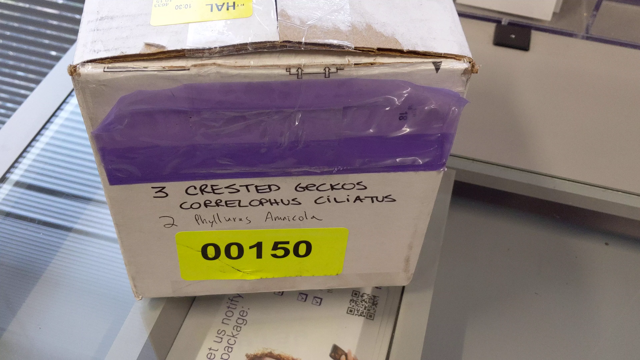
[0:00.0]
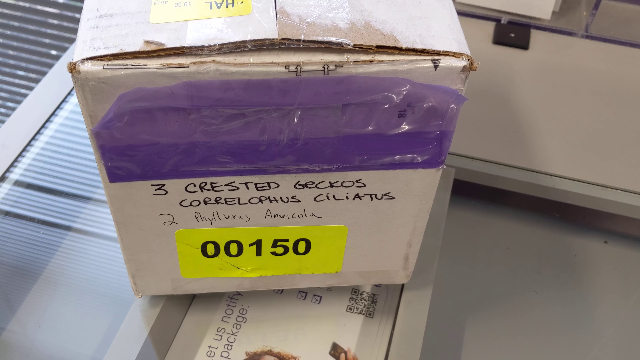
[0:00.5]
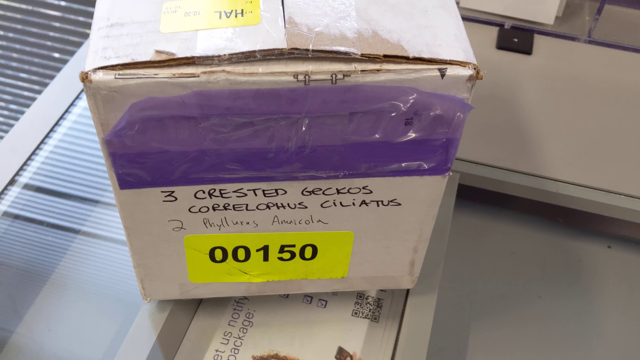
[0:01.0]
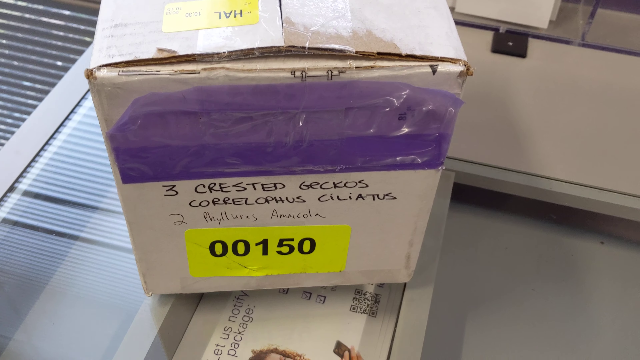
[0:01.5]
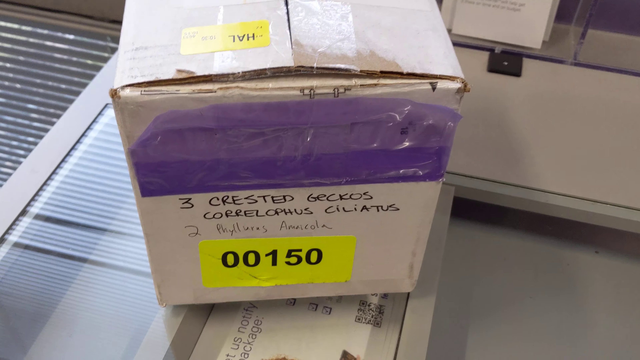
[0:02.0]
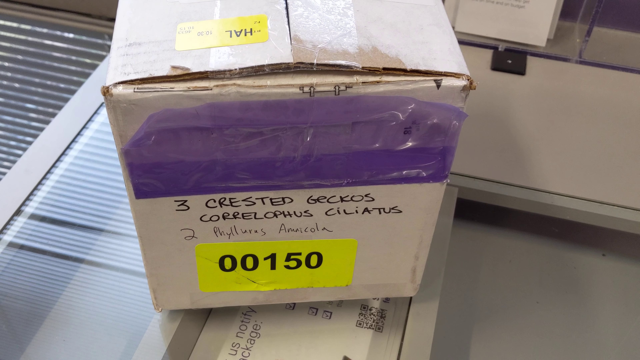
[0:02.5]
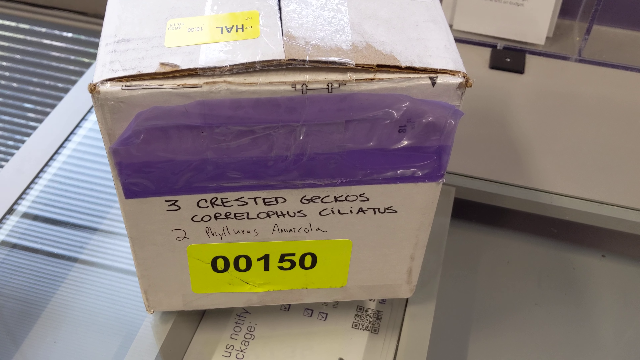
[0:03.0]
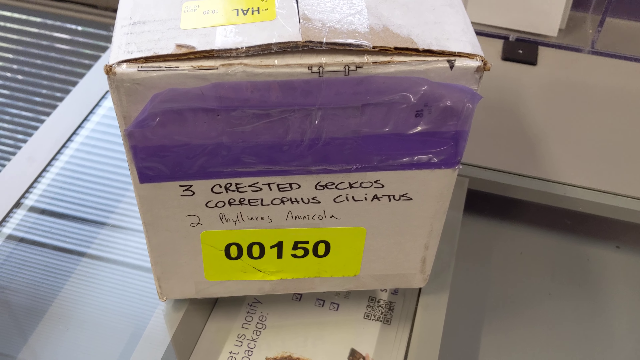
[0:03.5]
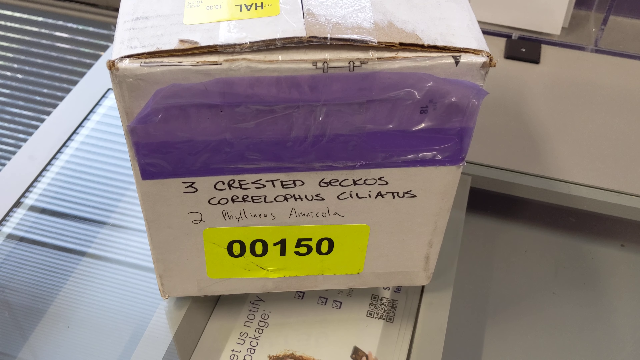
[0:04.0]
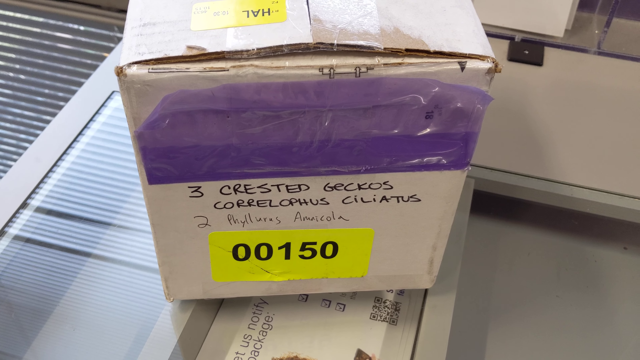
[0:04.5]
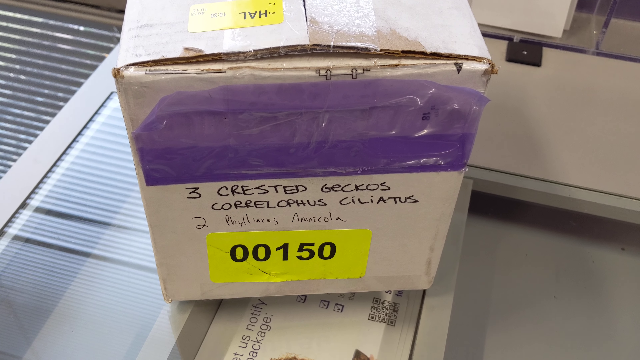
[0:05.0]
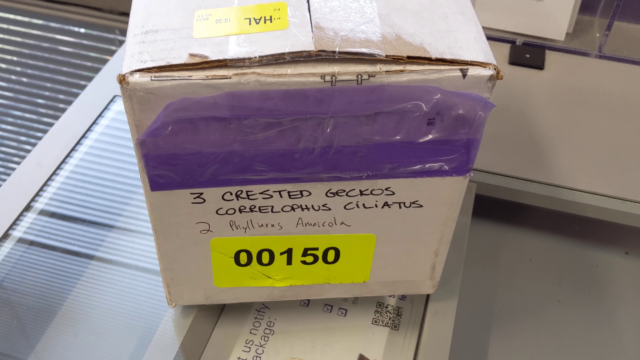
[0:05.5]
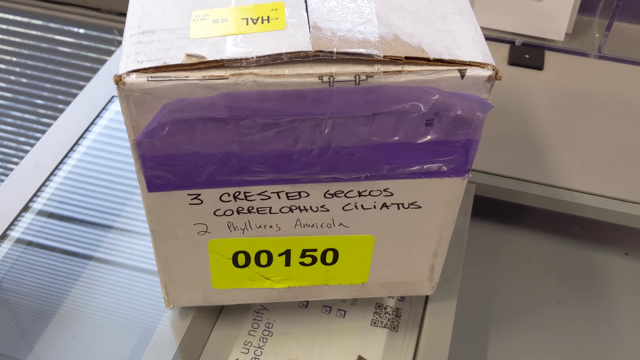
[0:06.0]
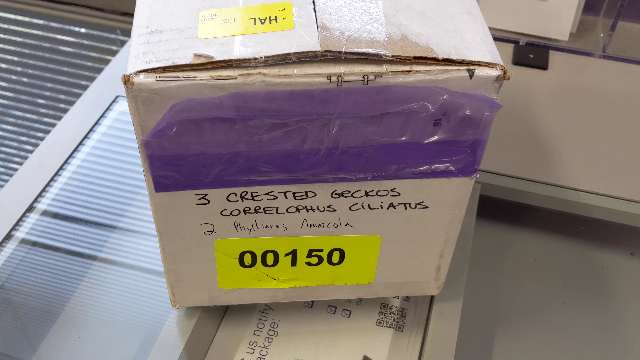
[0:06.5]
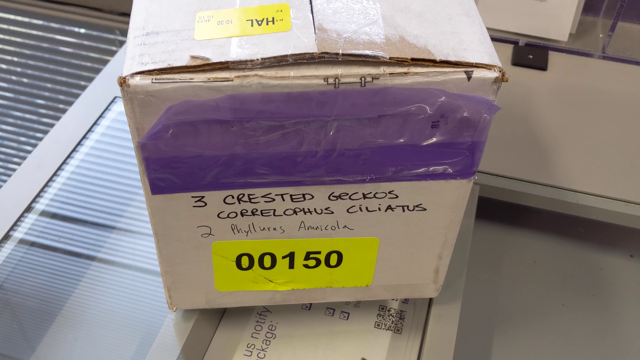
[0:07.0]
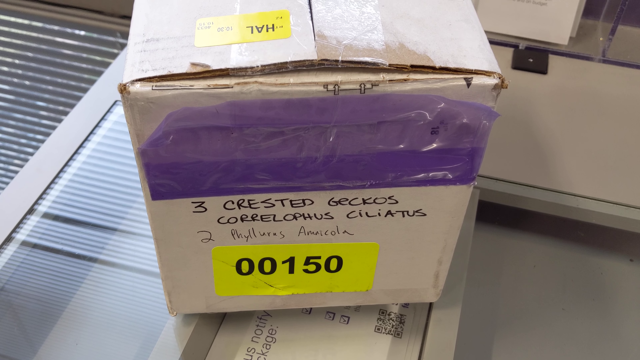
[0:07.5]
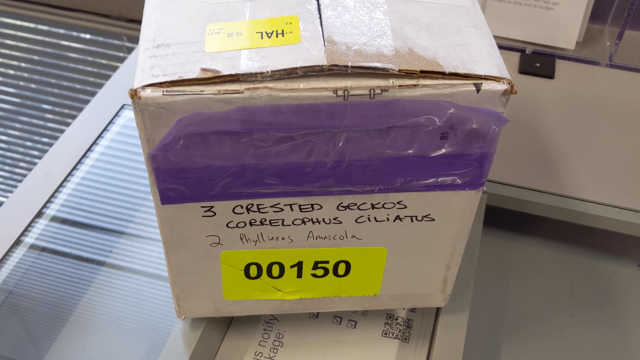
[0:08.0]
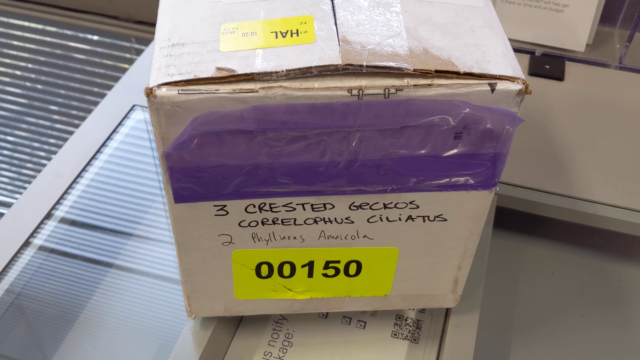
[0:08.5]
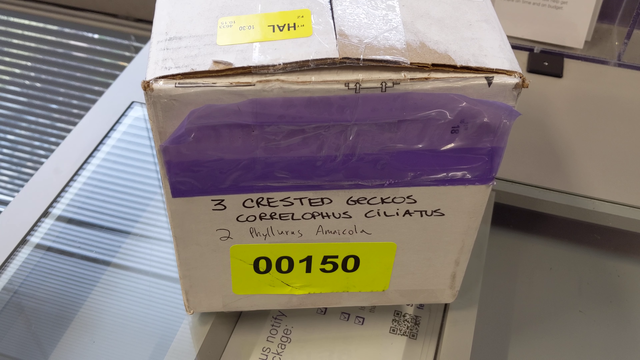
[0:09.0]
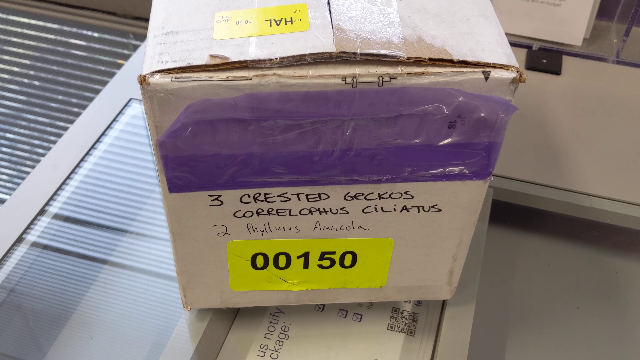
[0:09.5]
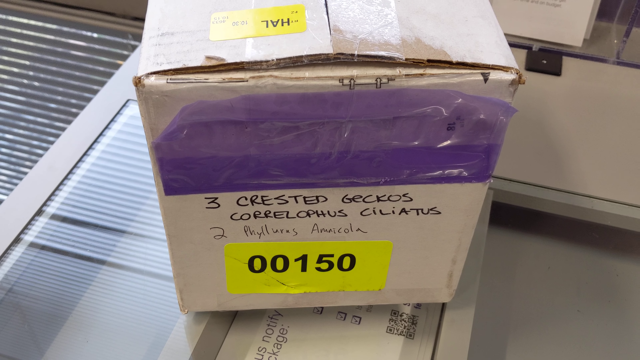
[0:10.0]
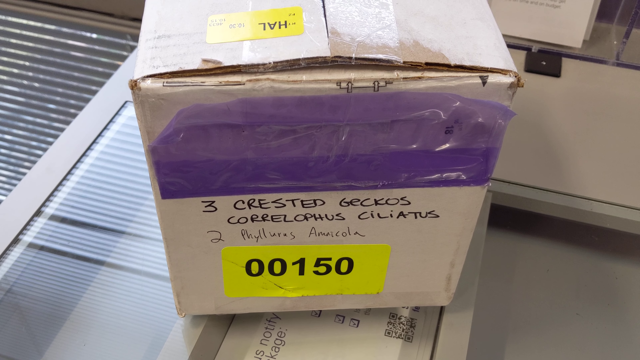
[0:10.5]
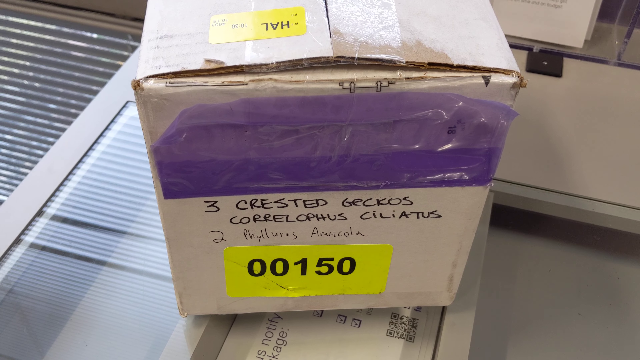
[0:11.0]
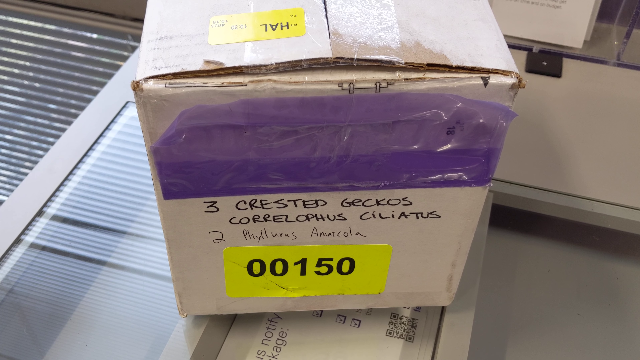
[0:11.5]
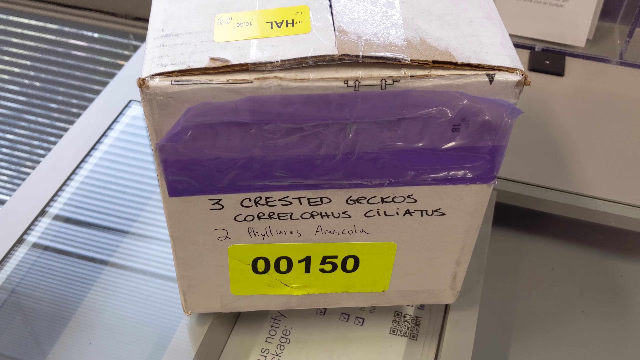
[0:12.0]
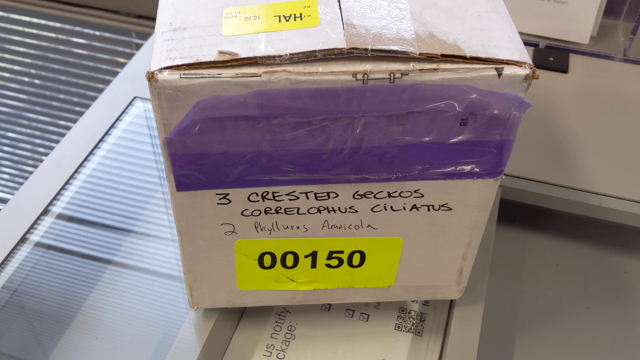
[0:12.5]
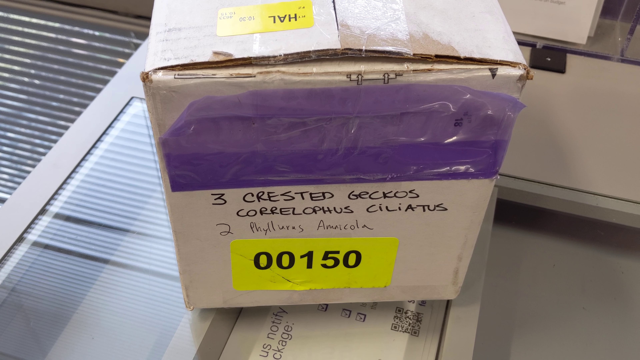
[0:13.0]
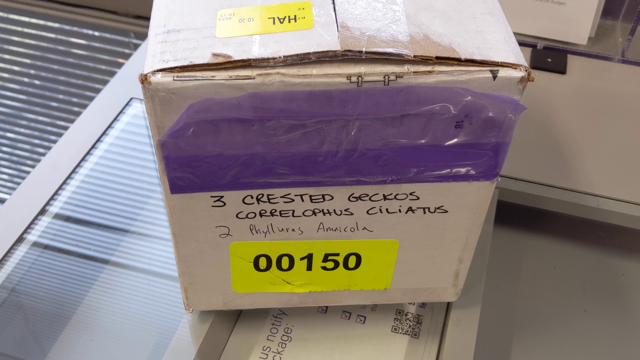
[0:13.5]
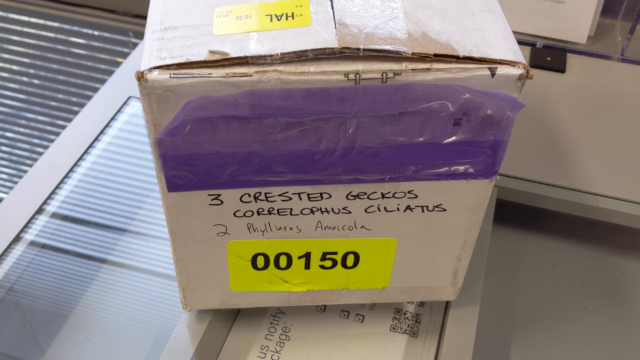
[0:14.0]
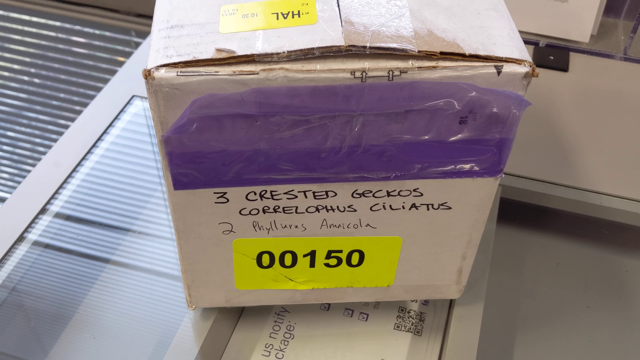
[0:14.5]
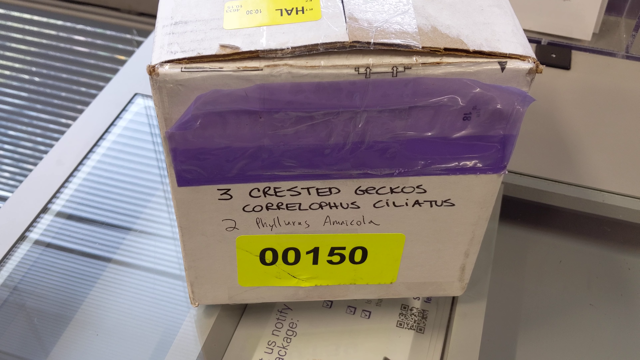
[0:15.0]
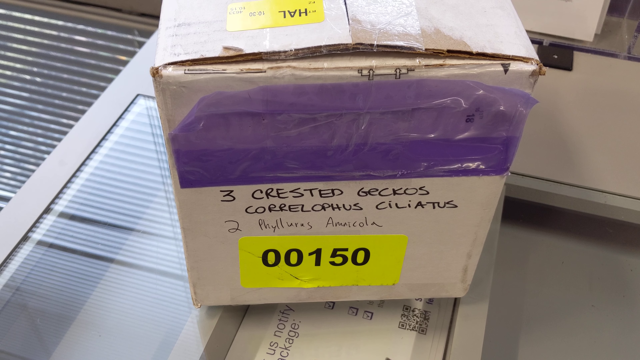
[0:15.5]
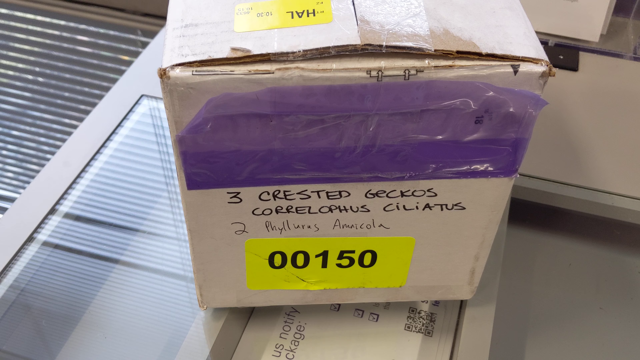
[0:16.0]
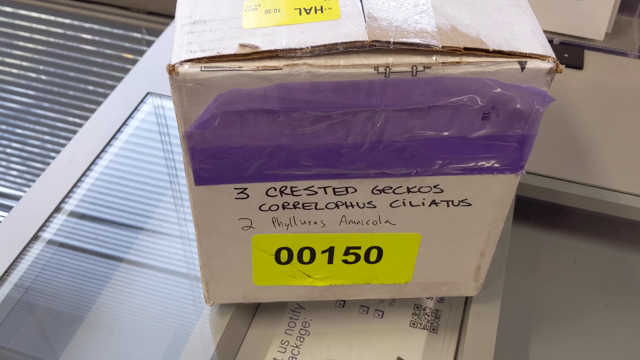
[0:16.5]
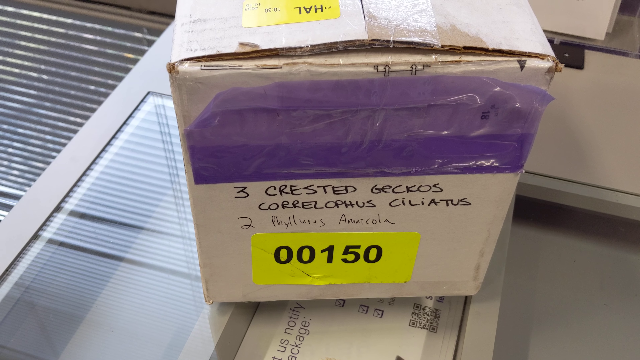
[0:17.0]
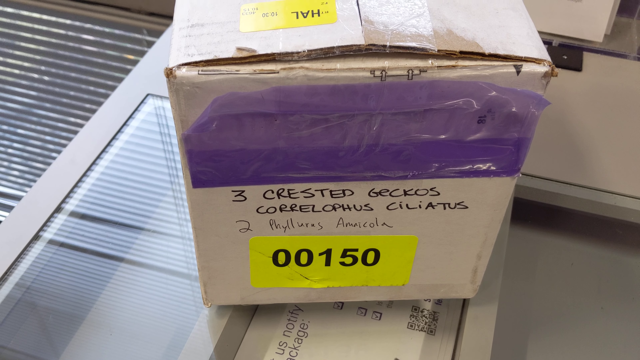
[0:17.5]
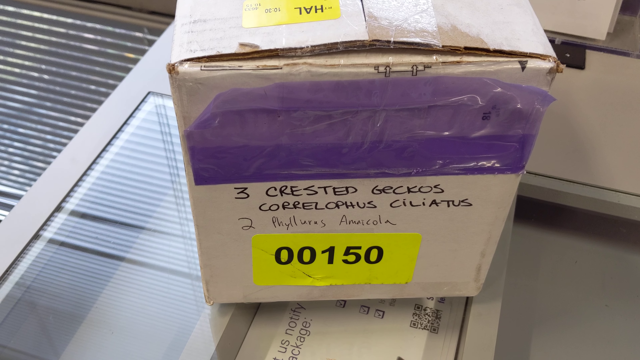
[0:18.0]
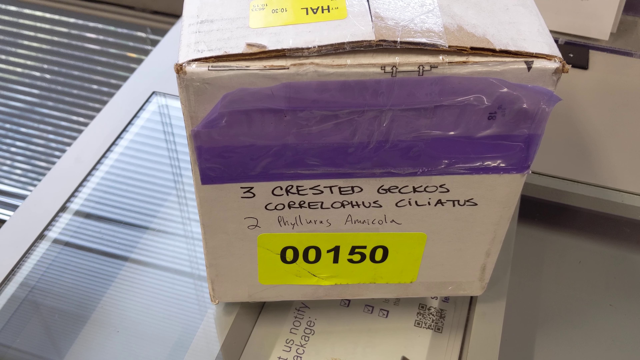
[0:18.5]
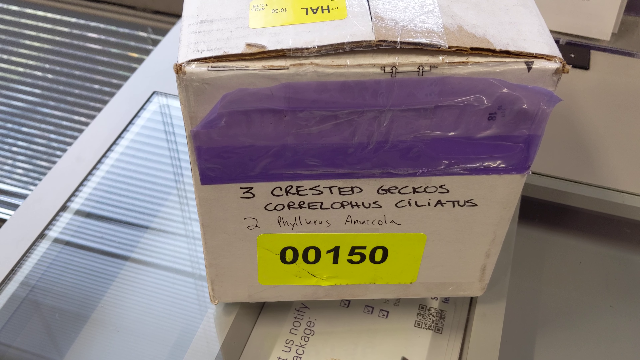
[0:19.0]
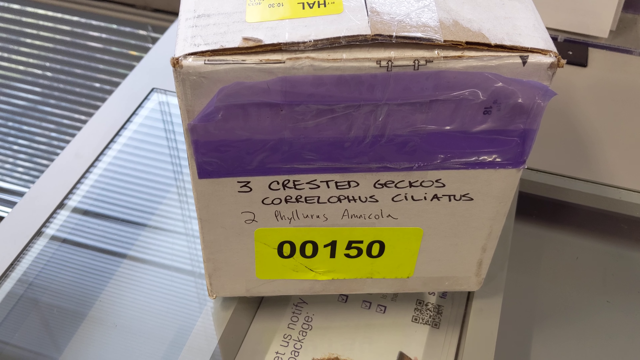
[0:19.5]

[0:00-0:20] A box is in the centre of the screen, taking up most of it. The camera filming it moves, so the box shifts ever so slightly left, right, up and down within the frame, although the box itself is not moving. The box appears to be on top of something, possibly a table; this surface is pale, sort of a white or light grey colour, and there appears to be some framing on it. The box's side faces the camera, showing the side edges of the two closed flaps that form its lid. The box is white, and its white paper coating is a little torn around the edges of the lid flaps. Blue shiny tape runs across the top half of the side facing the camera, and it looks like the tape is peeling off a little at the left and right top edges. Handwritten on the box in black pen are the words "3 crested geckos, Correlophus ciliatus," and, in a different style of black handwriting, "2 Phyllurus Amnicola." A yellow sticker at the bottom, slightly left of centre, has the printed numbers "00150" on it. On the top of the box is another yellow sticker, upside down from this viewpoint, which looks like it has the machine-printed capital letters "HAL".